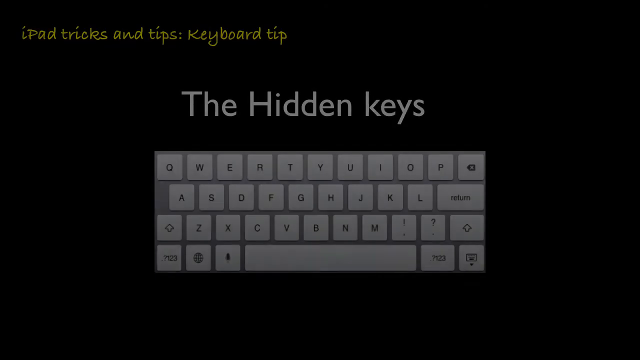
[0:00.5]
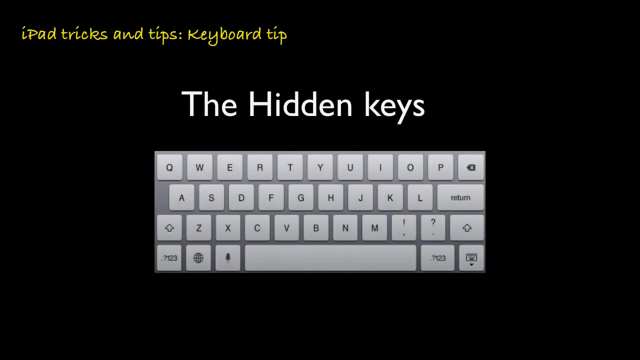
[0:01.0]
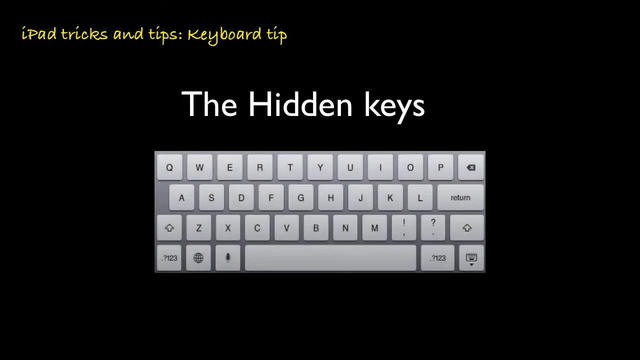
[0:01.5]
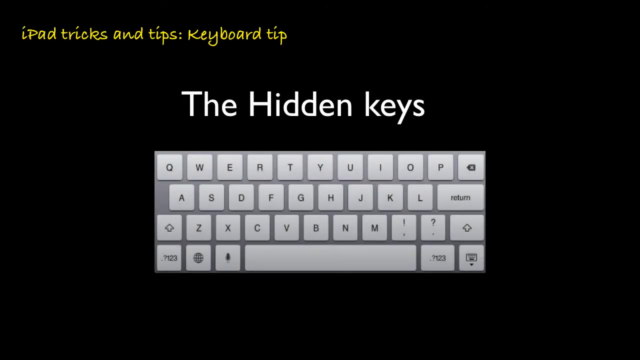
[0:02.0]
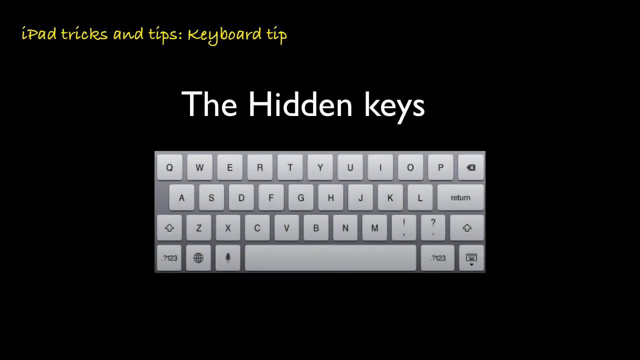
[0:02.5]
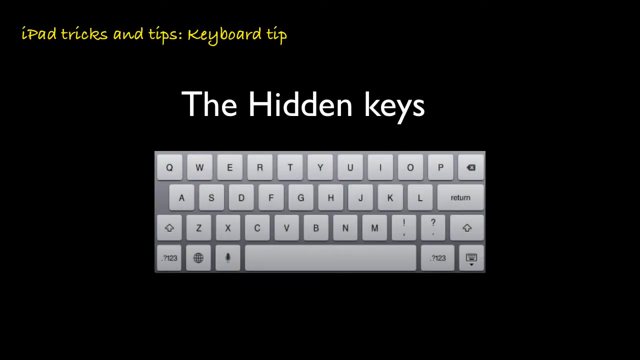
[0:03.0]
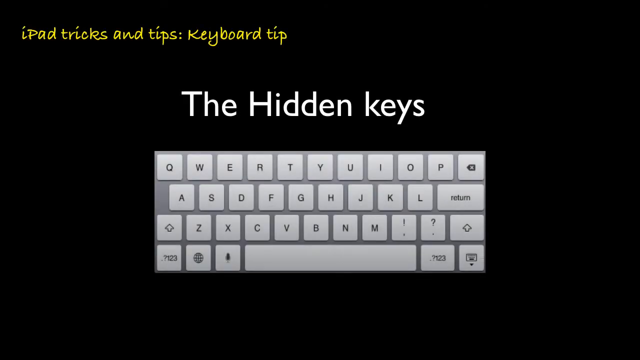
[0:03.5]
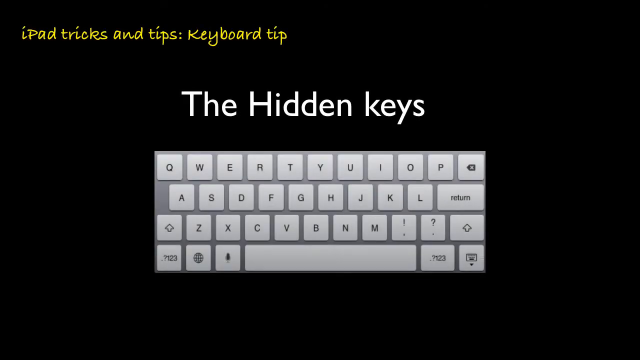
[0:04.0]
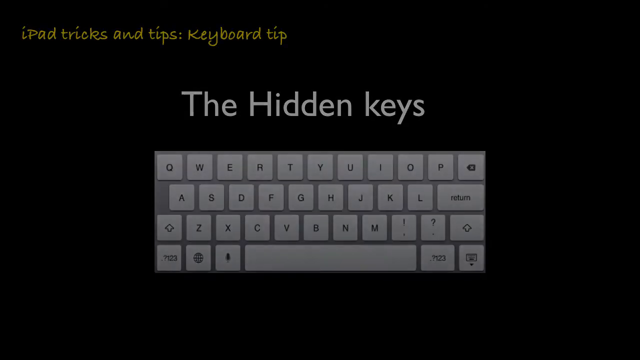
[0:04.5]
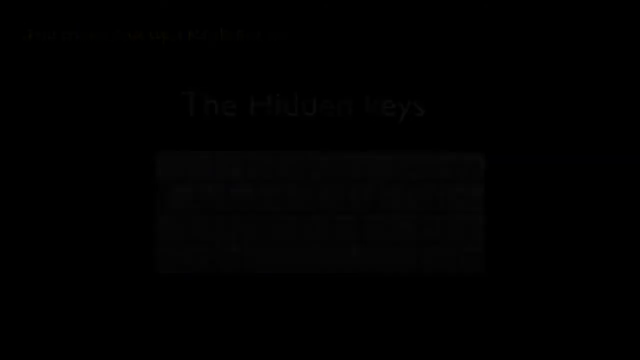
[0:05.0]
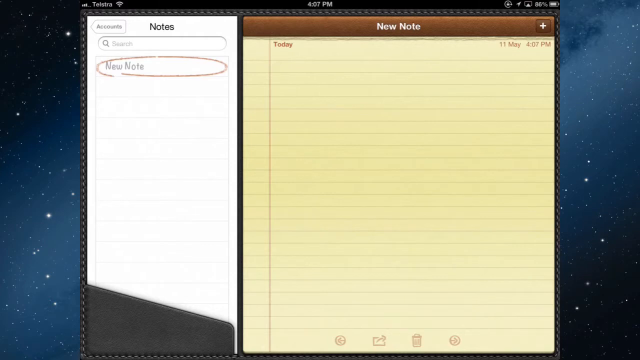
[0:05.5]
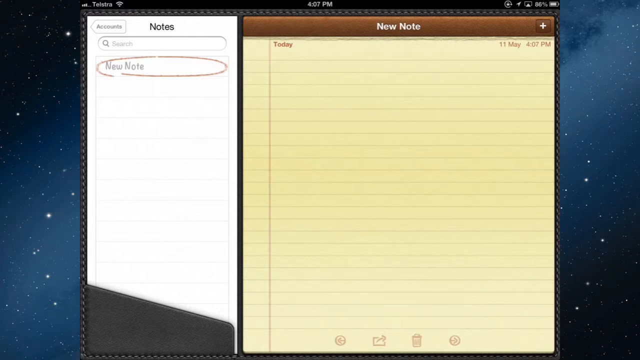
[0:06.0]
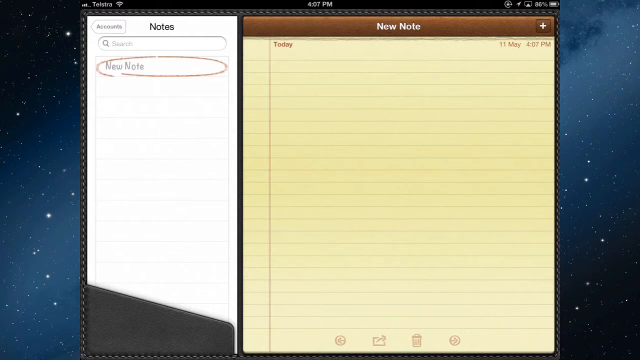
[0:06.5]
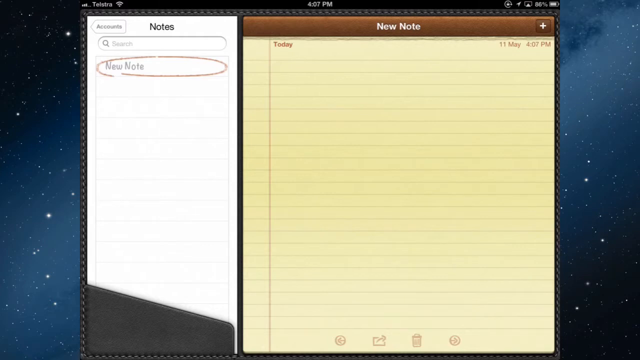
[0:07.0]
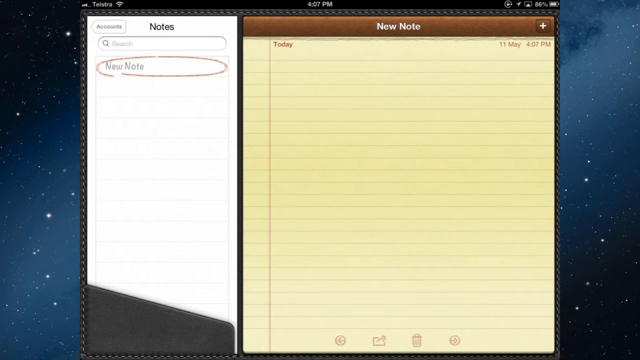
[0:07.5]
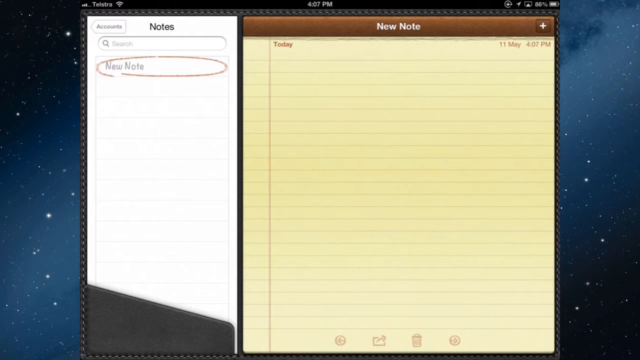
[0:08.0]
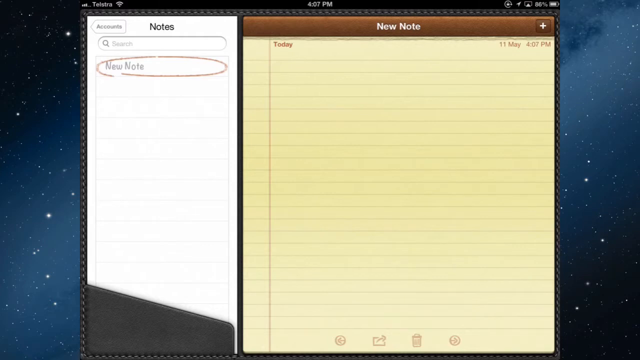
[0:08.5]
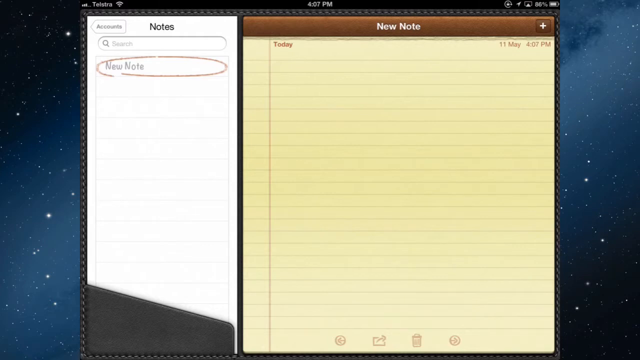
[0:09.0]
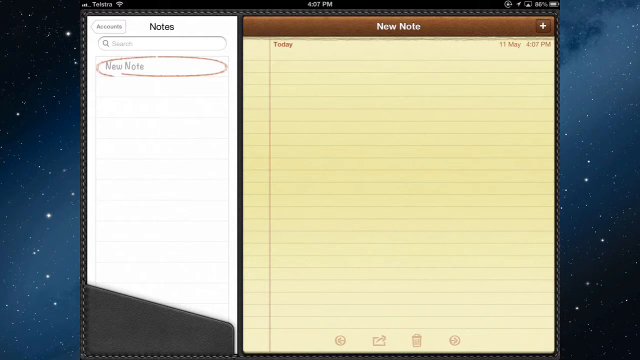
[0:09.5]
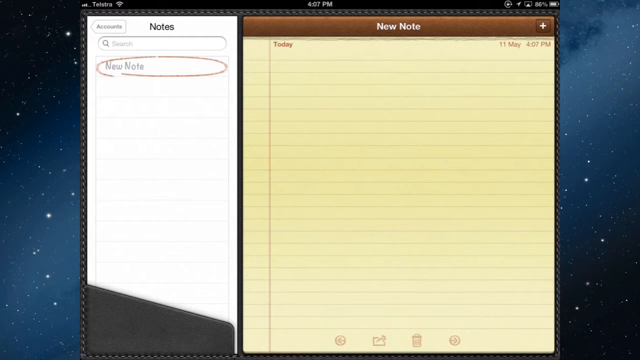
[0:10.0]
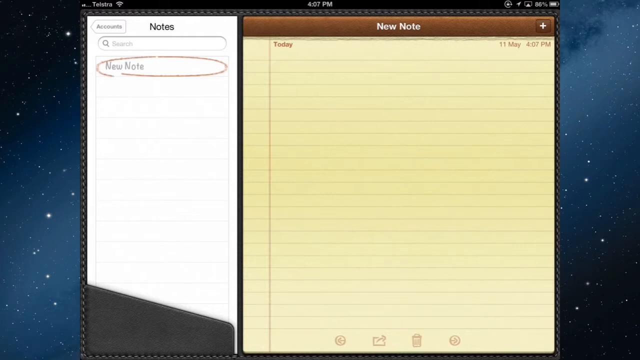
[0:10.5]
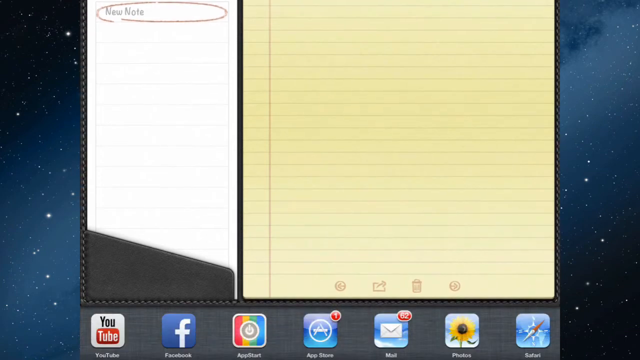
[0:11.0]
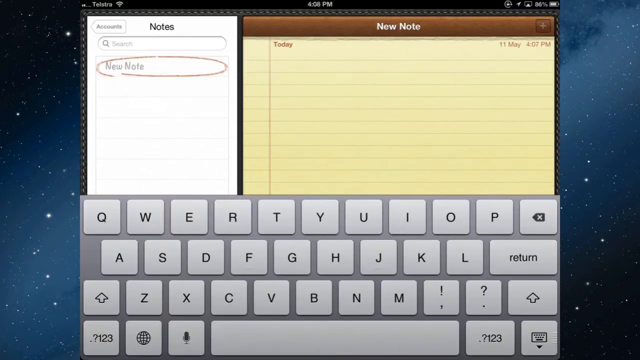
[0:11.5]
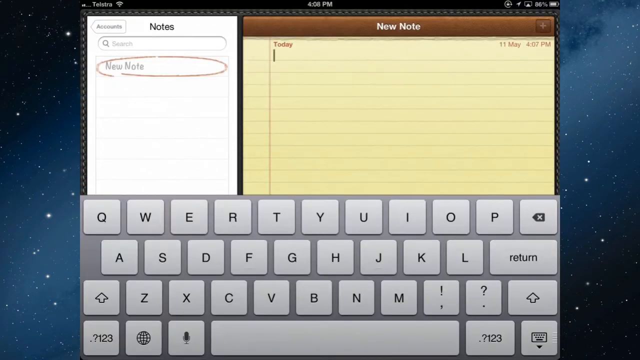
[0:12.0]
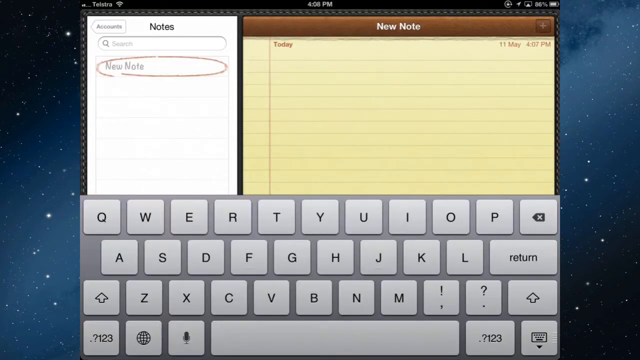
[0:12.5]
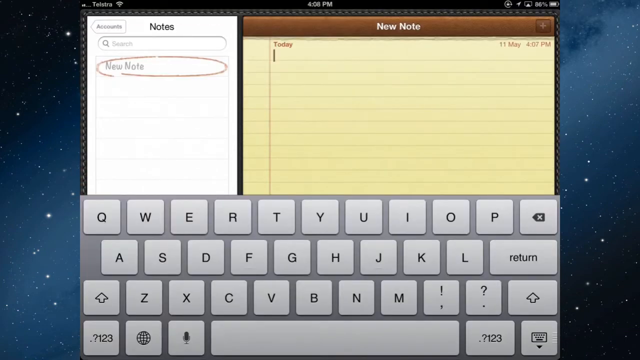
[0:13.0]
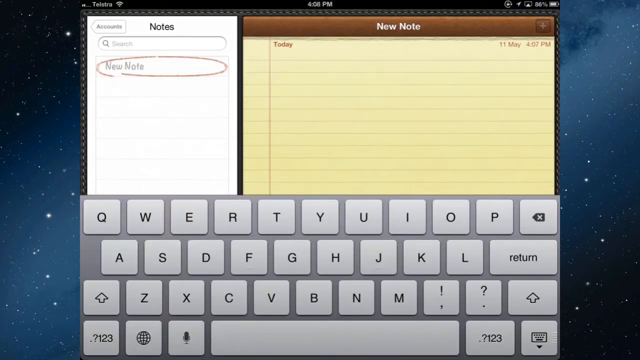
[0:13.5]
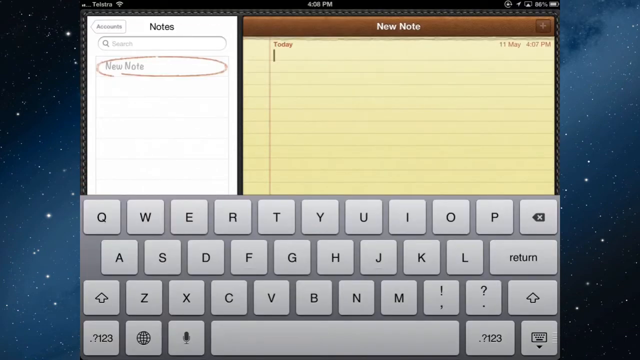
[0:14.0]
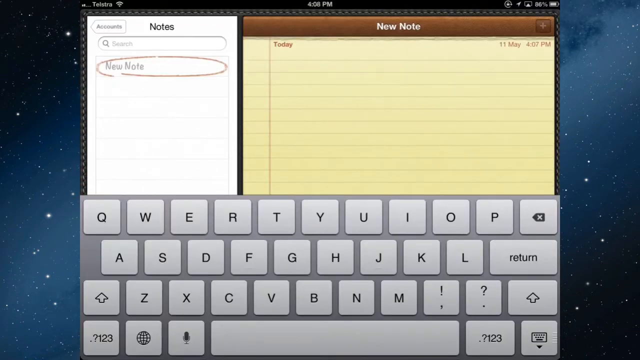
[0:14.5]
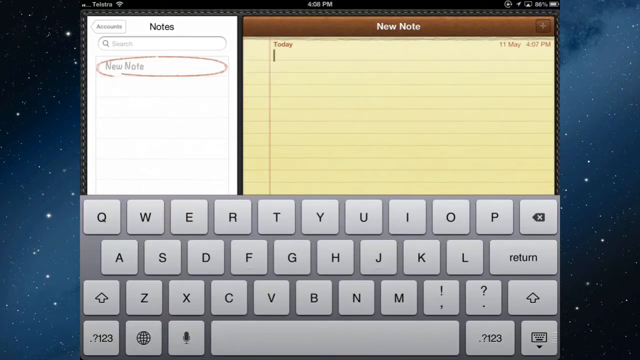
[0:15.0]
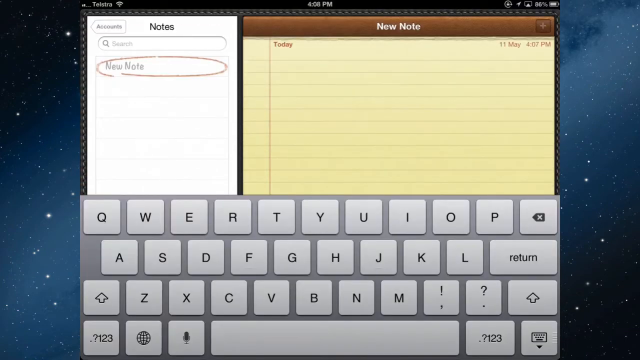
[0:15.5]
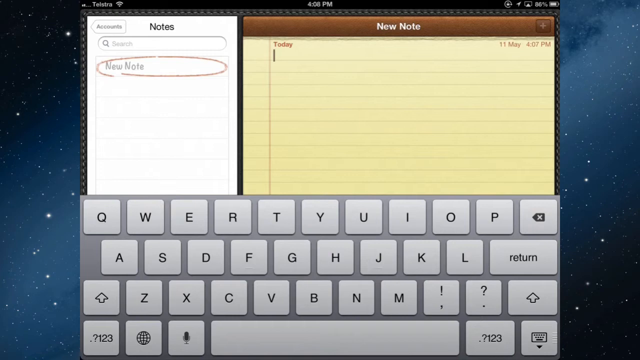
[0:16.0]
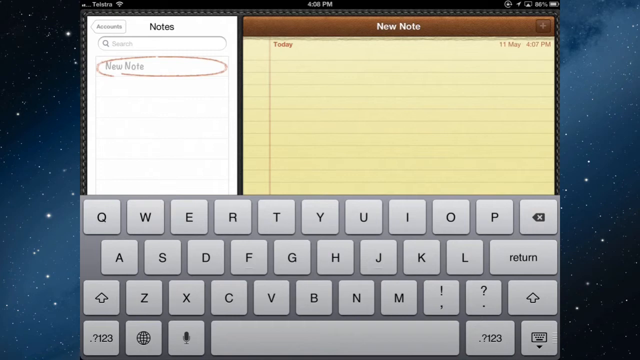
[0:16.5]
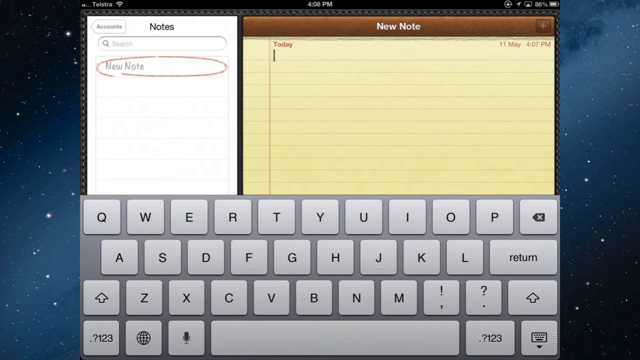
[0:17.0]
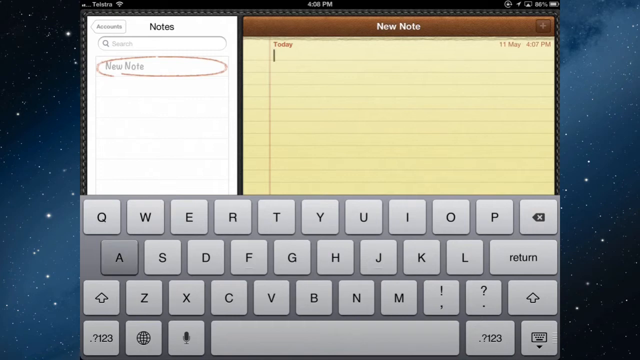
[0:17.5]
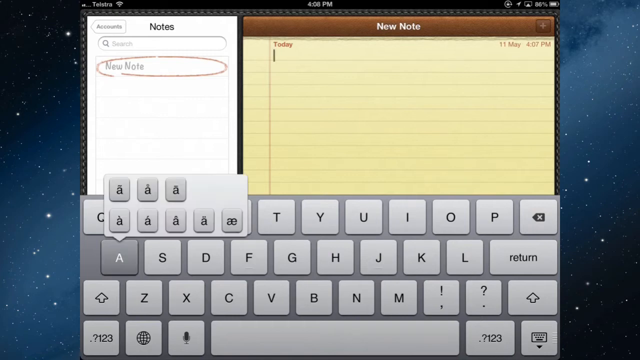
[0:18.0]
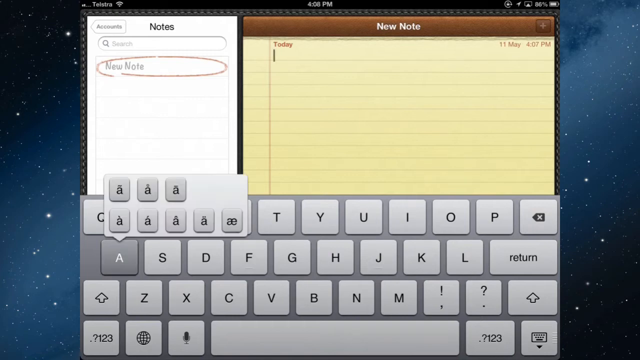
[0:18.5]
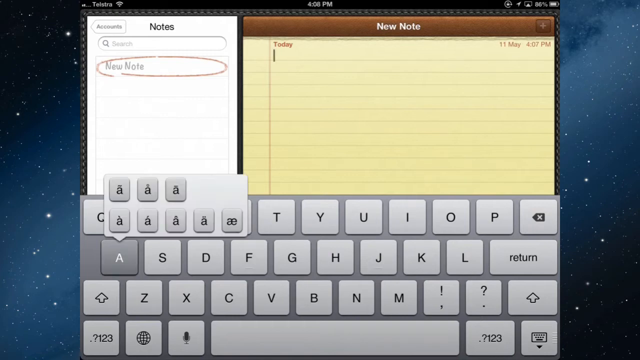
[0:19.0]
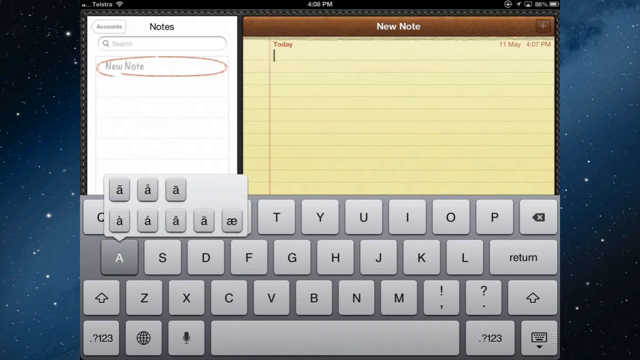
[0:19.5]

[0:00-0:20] An animated keyboard appears with white text on top of it that reads "the hidden keys," and above that there is some yellow text as well. The background is plain black. The video then cuts to a notepad with yellow pages on the right side, and on the left side more notes whose pages look white. The keyboard reappears as a gray keyboard, a cursor blinks on the yellow notepad, and a menu pops up by the keyboard showing the letter A with many different lines on top of it. The yellow notepad has a brown border at the top reading "new note" in white text; underneath is what looks like brown text reading "today," and on the right side is the date.